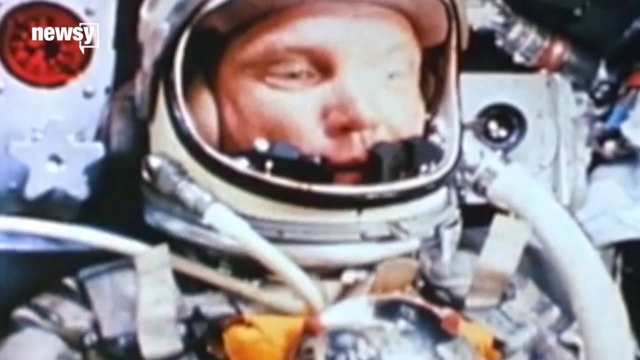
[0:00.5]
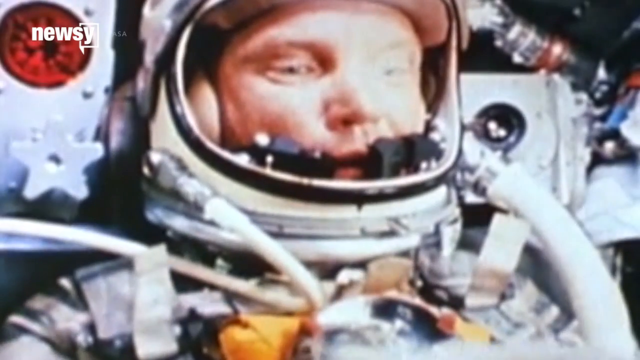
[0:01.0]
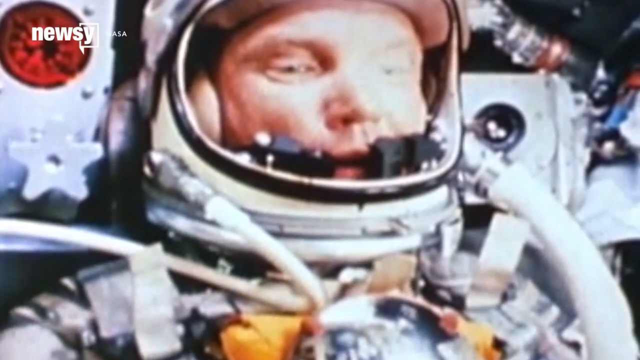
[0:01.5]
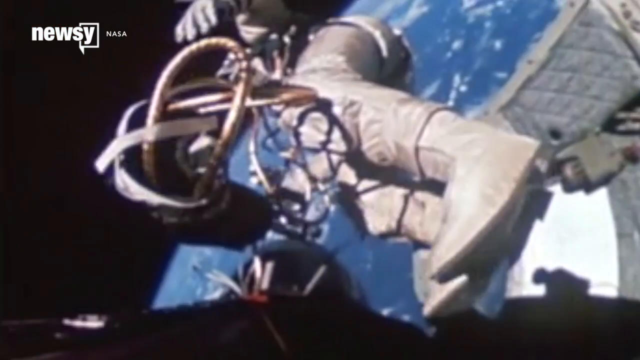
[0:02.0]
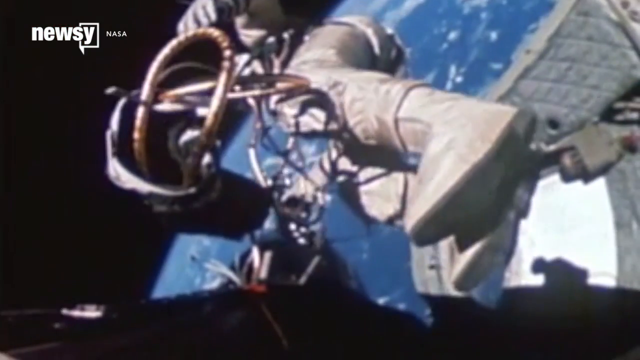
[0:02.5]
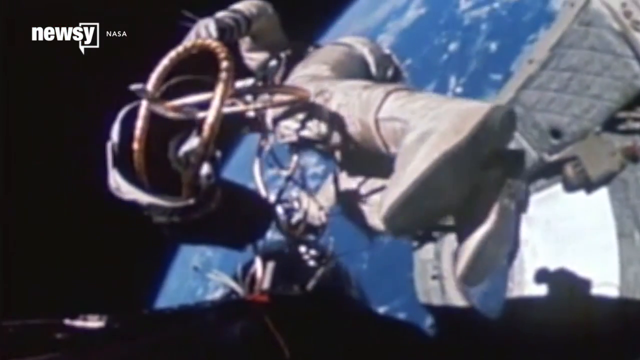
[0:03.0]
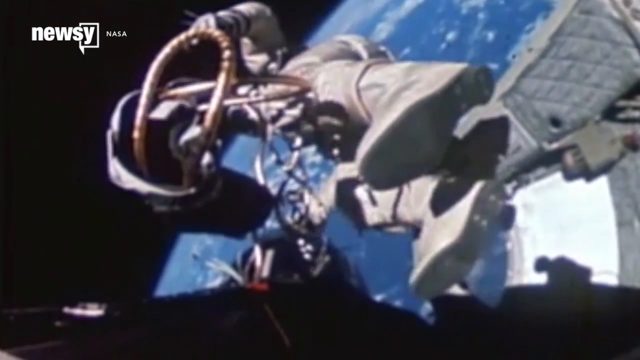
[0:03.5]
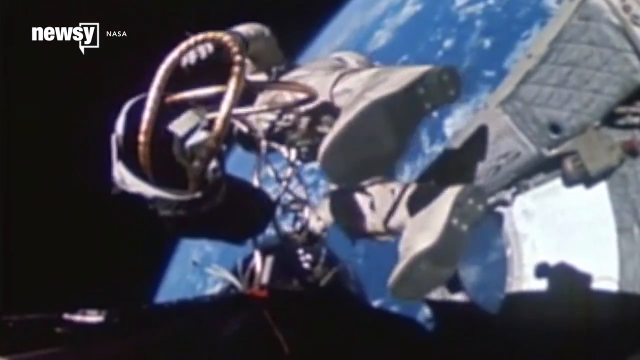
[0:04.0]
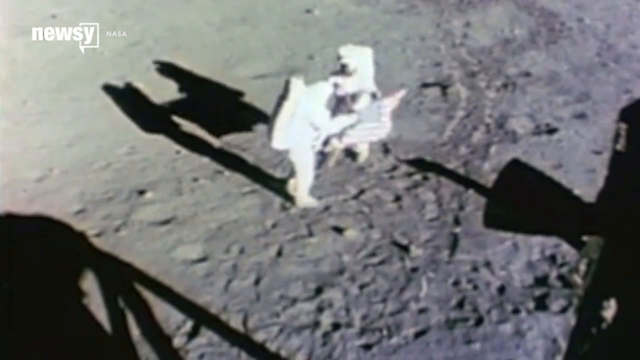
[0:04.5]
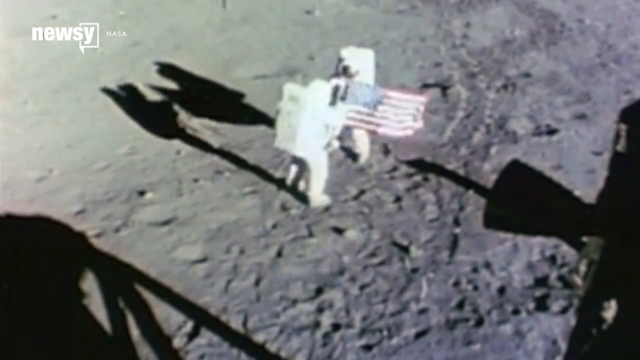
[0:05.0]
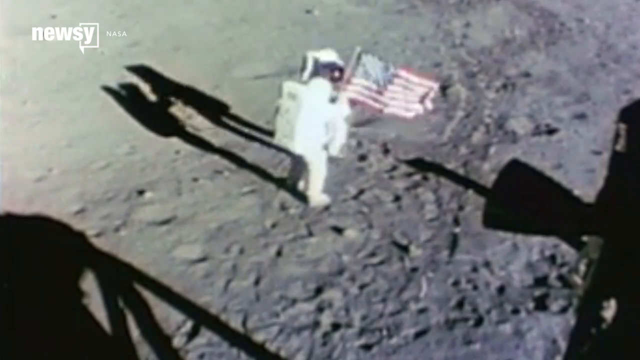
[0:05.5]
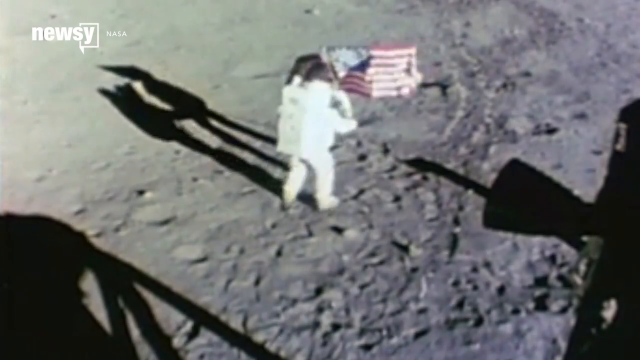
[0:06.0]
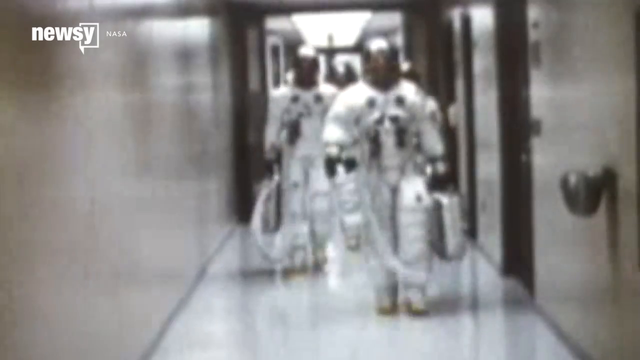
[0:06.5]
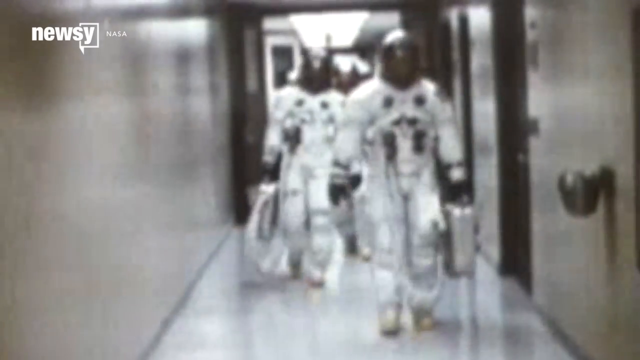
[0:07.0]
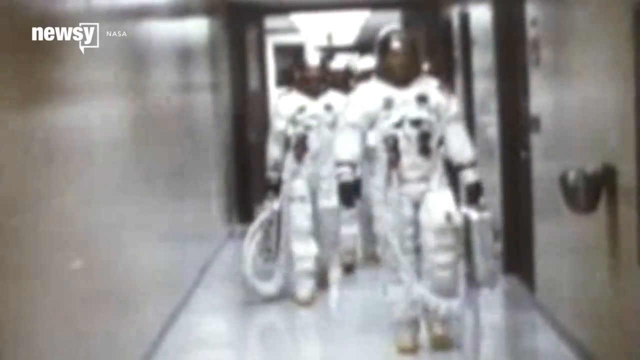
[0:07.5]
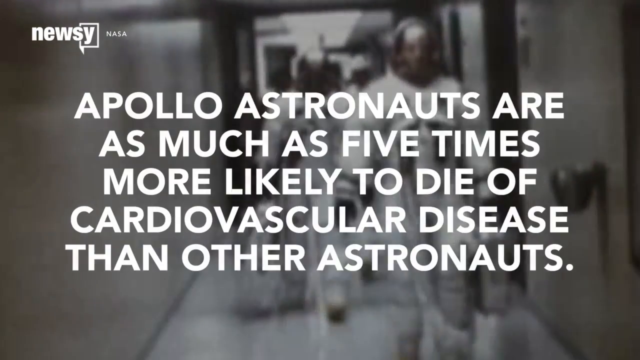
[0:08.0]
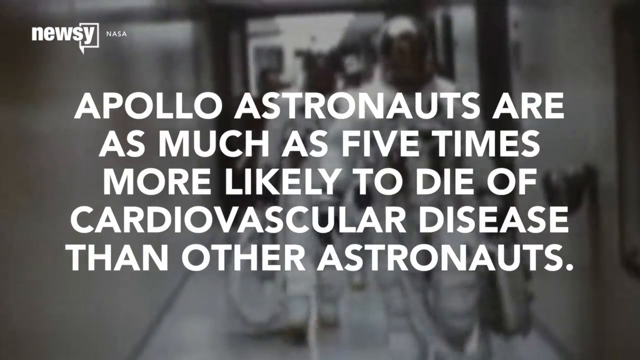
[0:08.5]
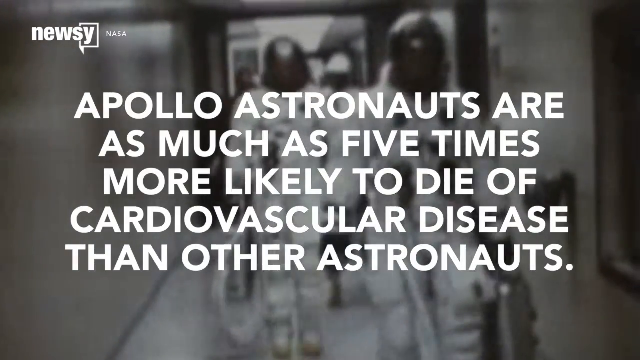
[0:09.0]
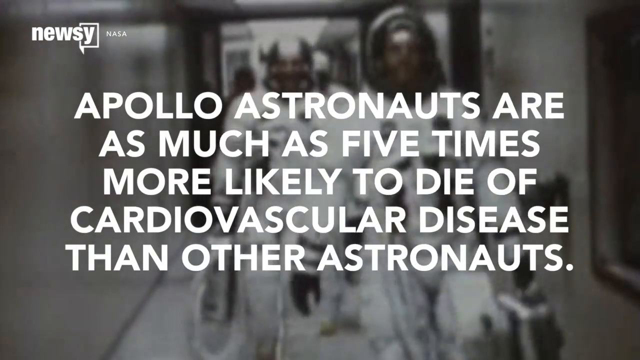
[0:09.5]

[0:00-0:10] A Newsy report about an astronaut opens with his face inside an astronaut helmet. He floats in the air, and then the astronauts have landed on the moon. An American flag is with them, and there are two astronauts. Next, astronauts walk down a hallway in their gear while large white print across the screen reads "Apollo astronauts are as much as five times more likely to die of cardiovascular disease than other astronauts." There are quite a few of them, and they carry little silver suitcases and possibly some hoses.